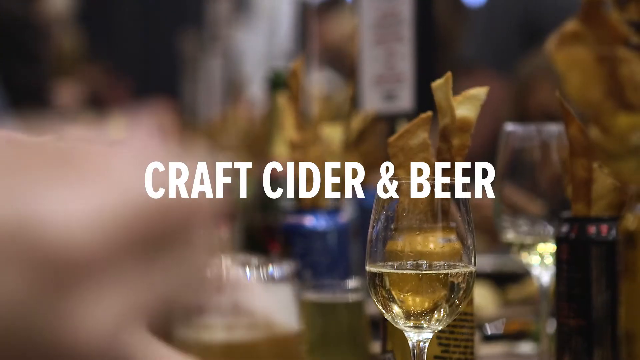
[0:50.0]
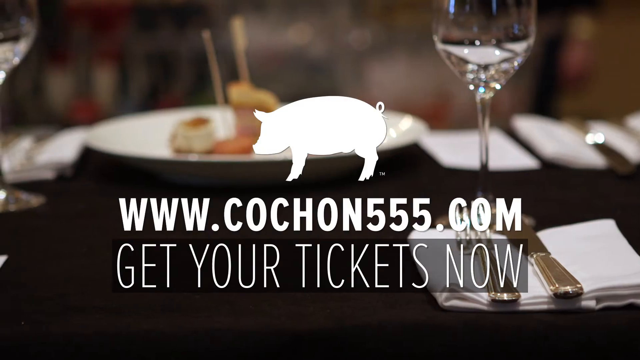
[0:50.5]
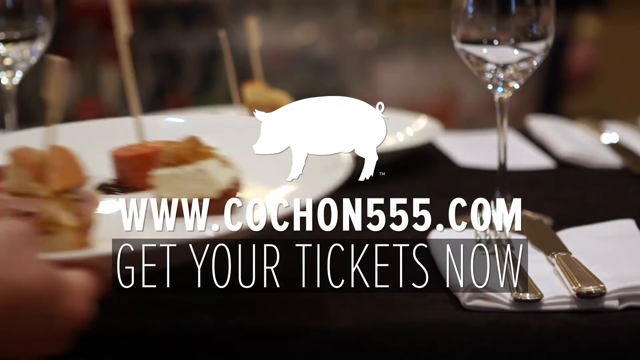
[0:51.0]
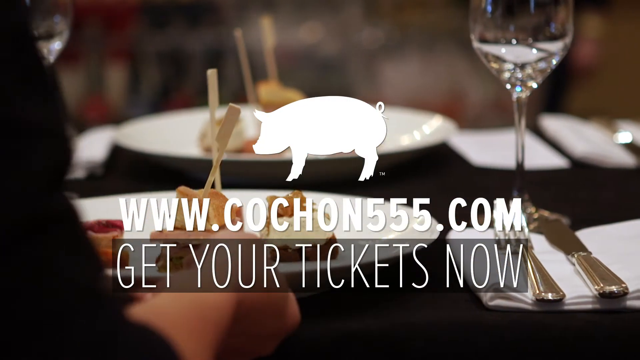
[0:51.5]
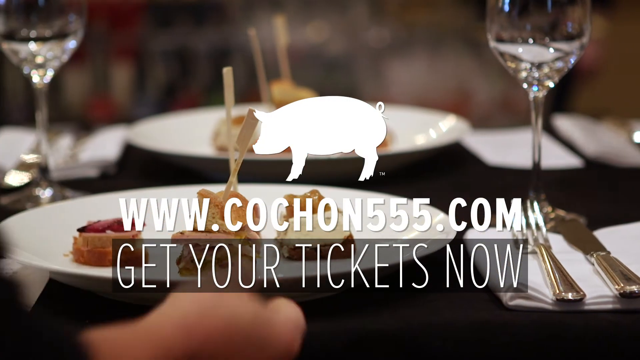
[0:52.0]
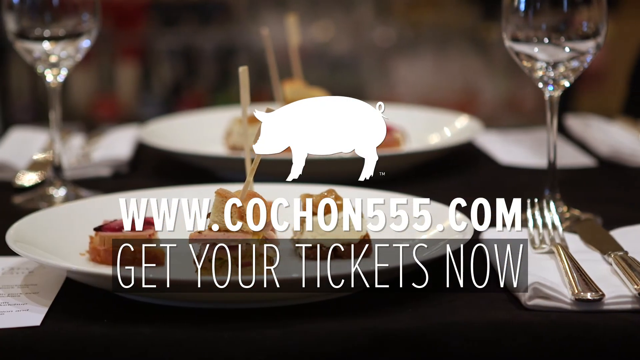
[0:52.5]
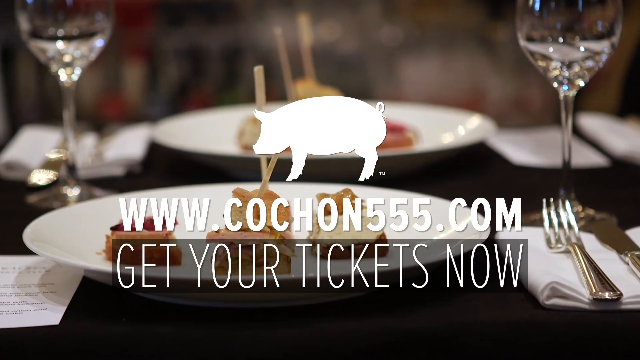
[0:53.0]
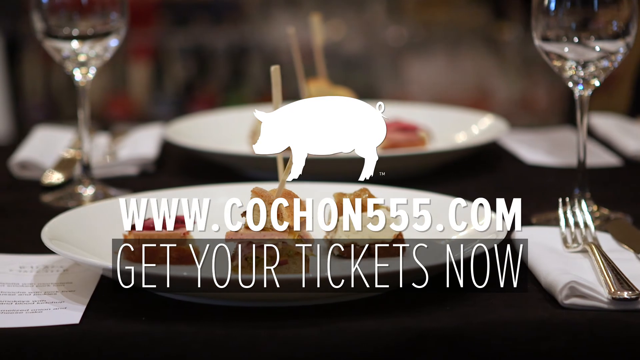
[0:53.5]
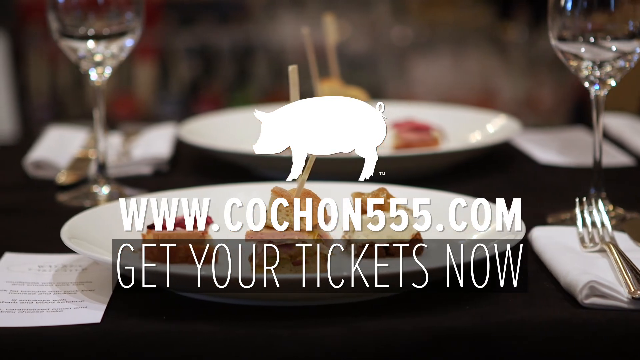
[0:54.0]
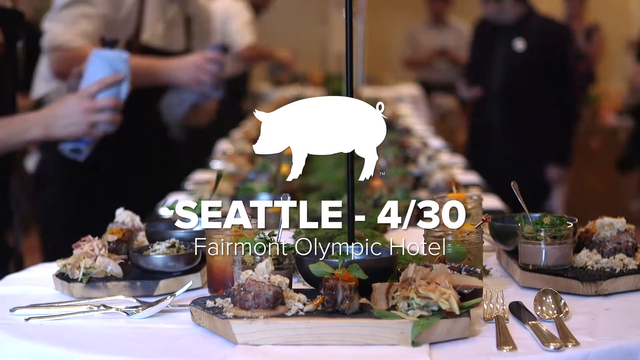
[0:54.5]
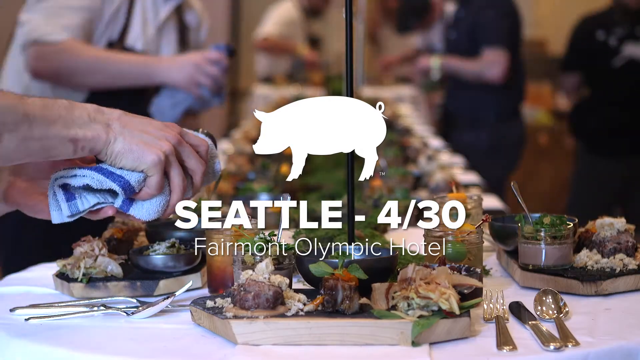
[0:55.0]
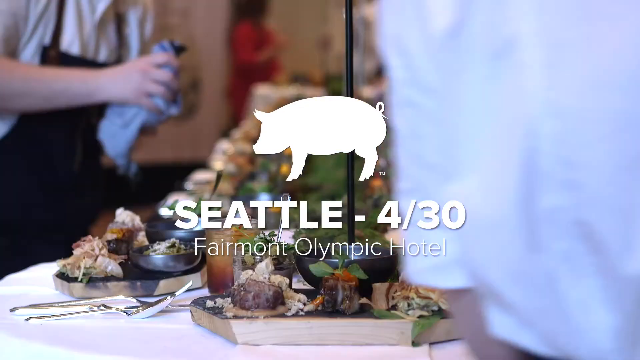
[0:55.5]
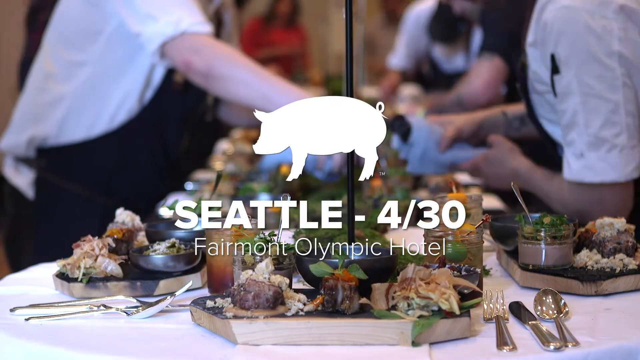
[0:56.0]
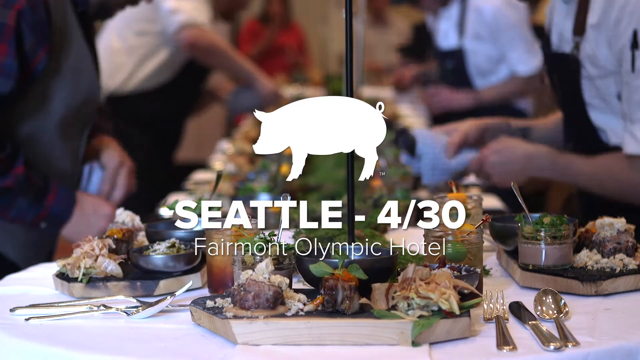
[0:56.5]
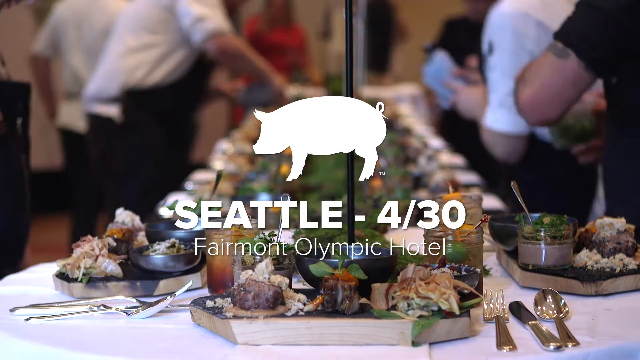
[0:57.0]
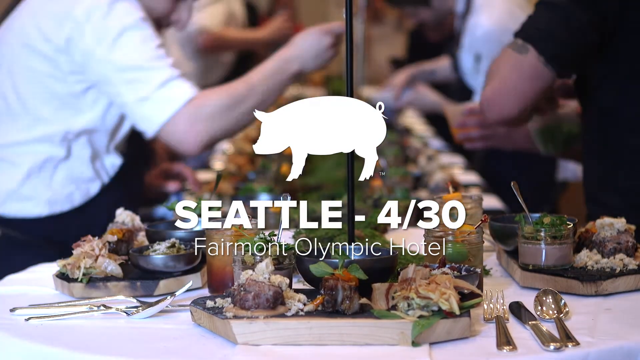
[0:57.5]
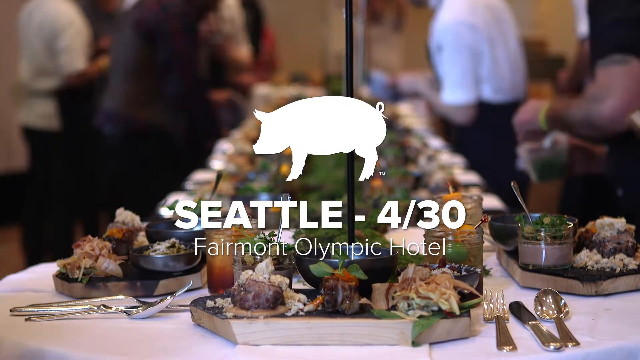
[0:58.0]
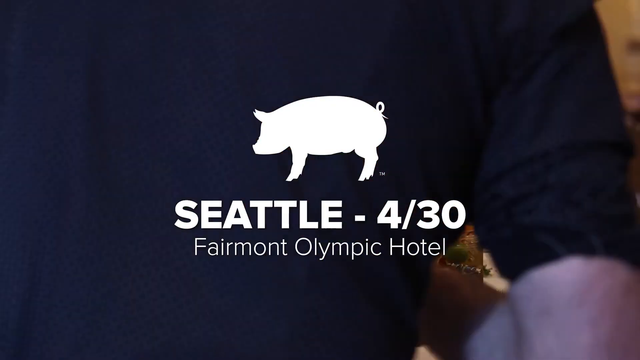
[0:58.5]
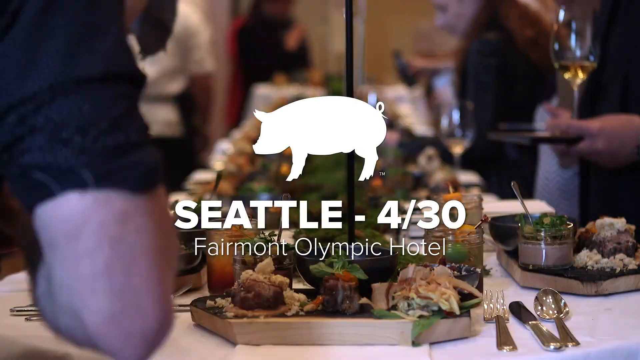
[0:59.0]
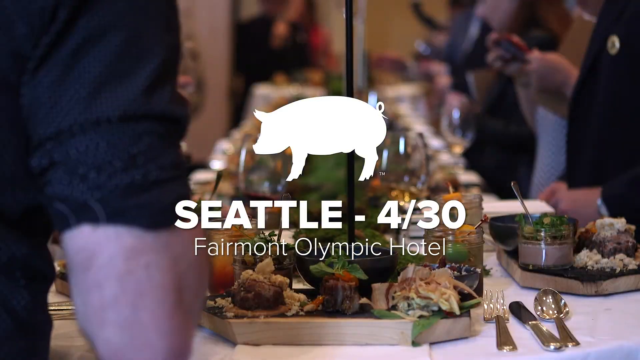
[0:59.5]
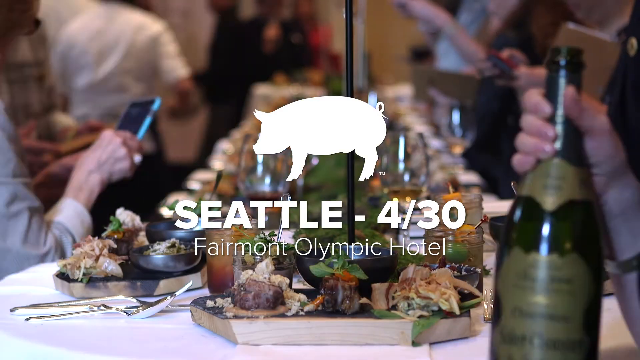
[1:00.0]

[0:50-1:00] The text "craft cider and beer" appears at the center. People sit across tables, and a white pig logo is shown. The text "www.churchon555.com, get your tickets now" appears. The pig is on some kind of table, and the tables hold glasses, knives and forks. Other foods are being served. The text "Seattle 4/30 Fairmont Olympic Hotel" is shown along with the white pig logo. Many hotel staff members are working.